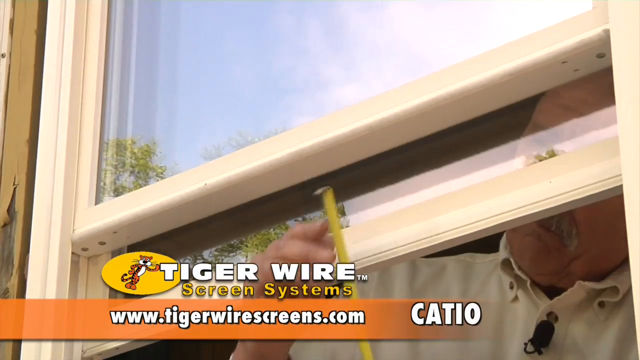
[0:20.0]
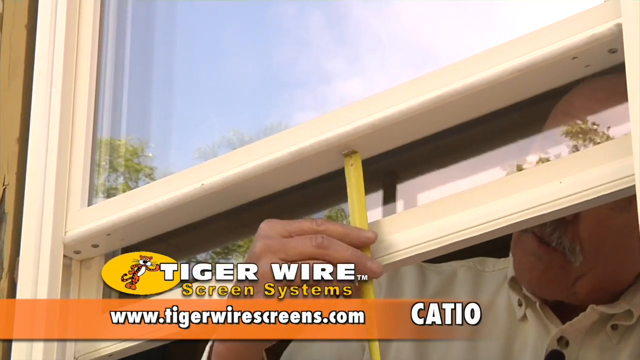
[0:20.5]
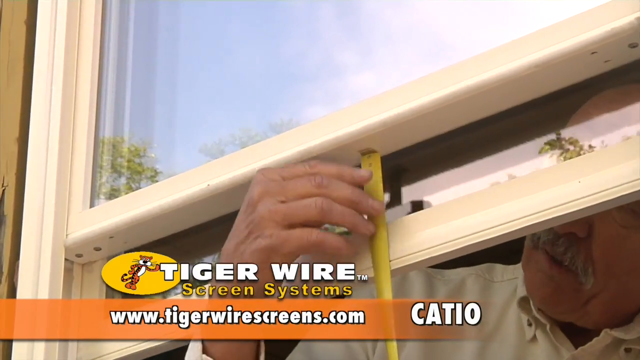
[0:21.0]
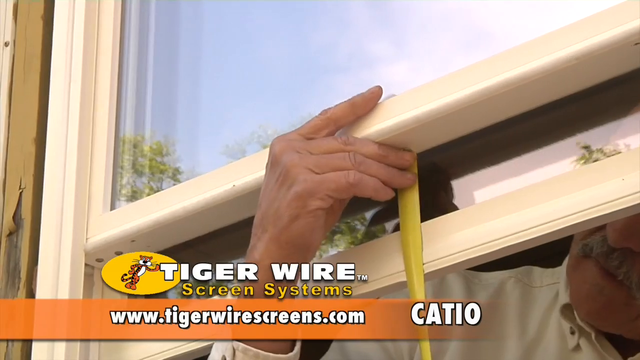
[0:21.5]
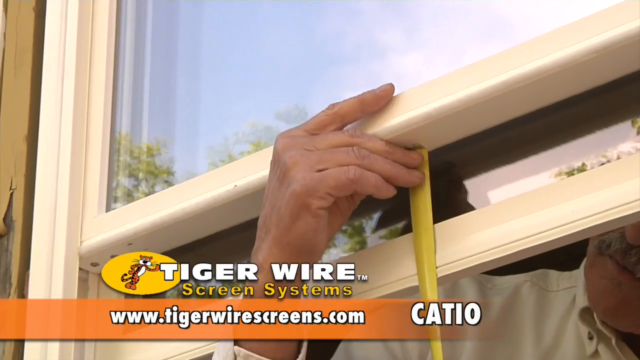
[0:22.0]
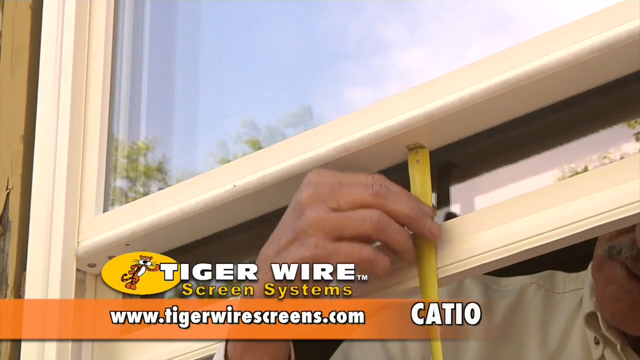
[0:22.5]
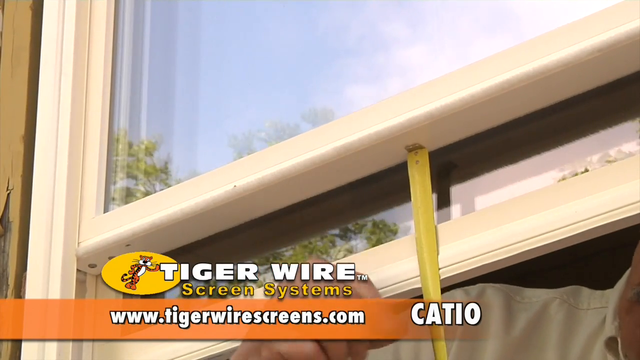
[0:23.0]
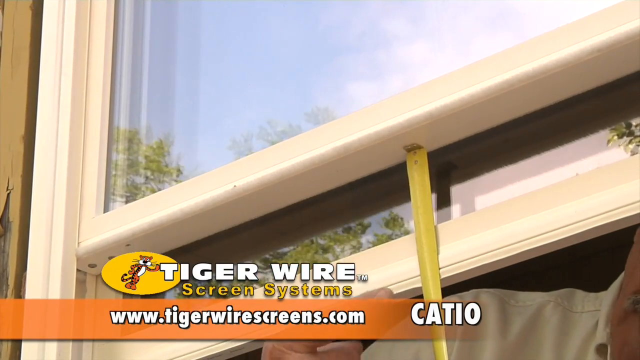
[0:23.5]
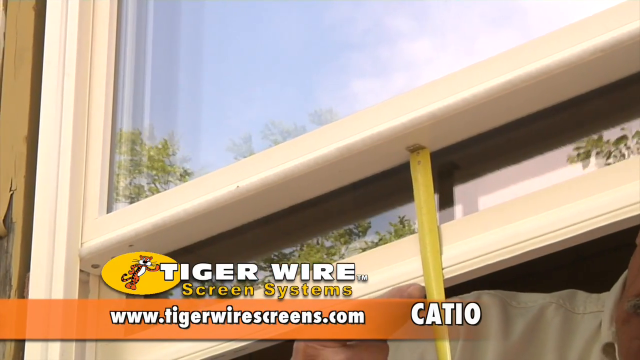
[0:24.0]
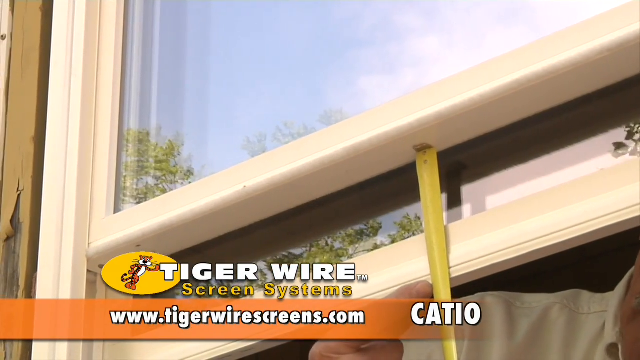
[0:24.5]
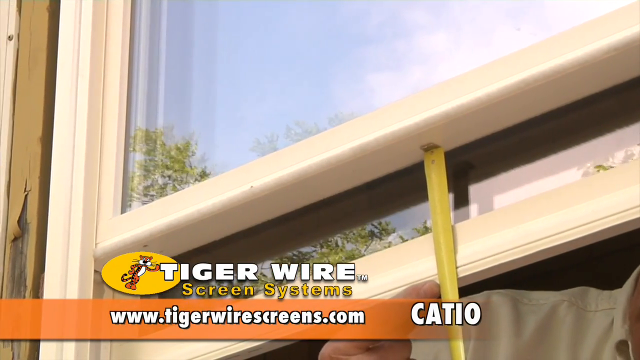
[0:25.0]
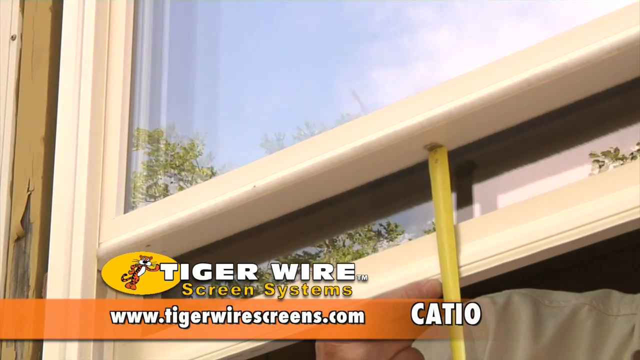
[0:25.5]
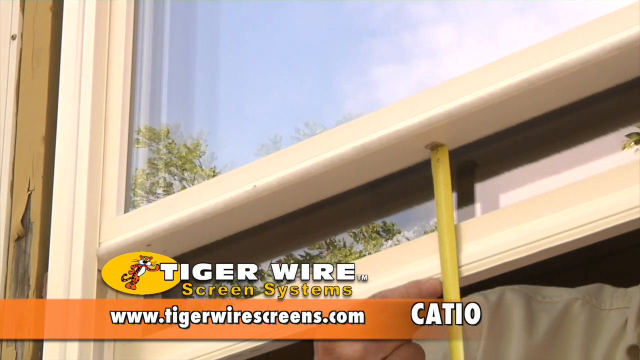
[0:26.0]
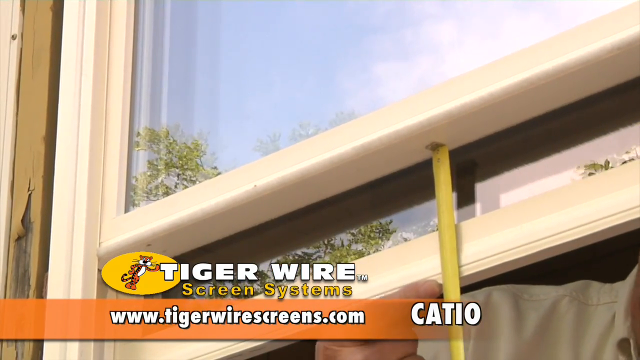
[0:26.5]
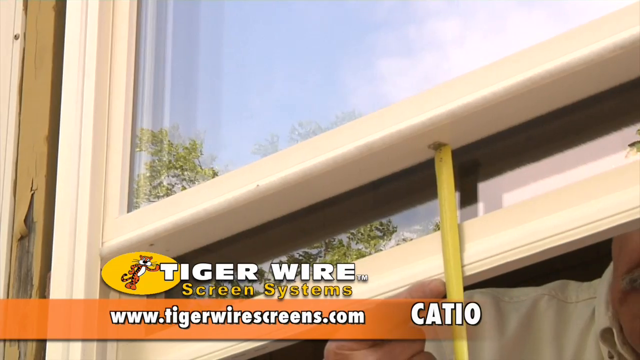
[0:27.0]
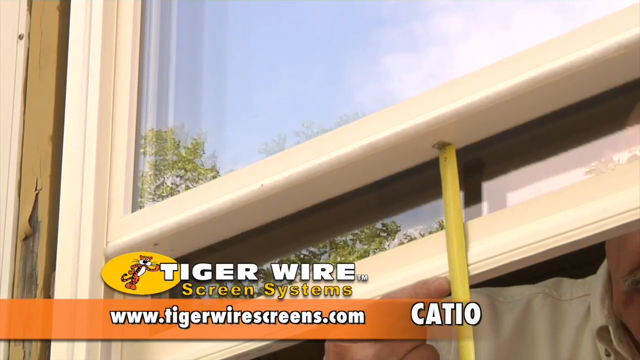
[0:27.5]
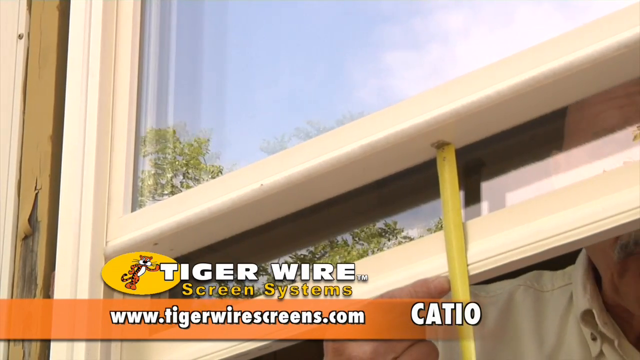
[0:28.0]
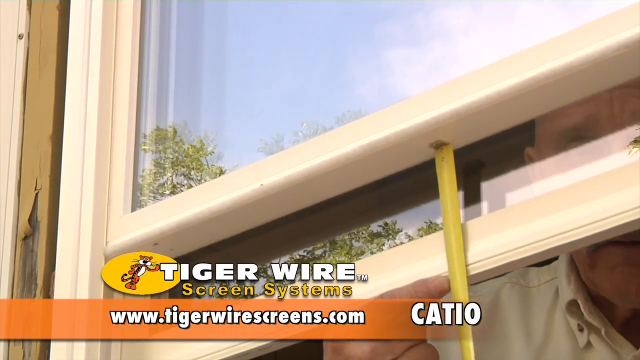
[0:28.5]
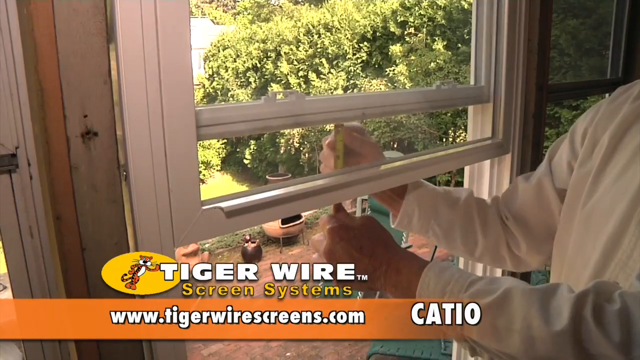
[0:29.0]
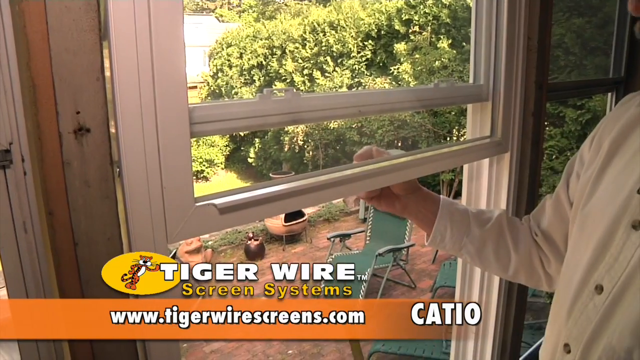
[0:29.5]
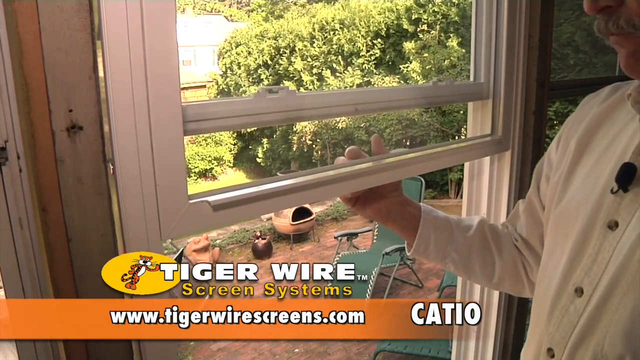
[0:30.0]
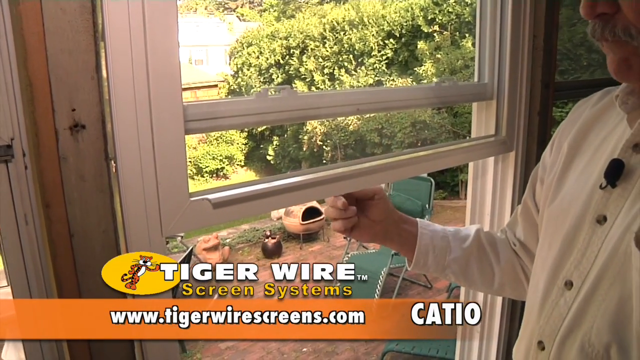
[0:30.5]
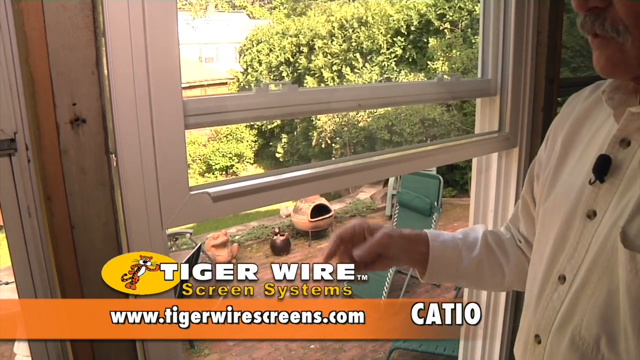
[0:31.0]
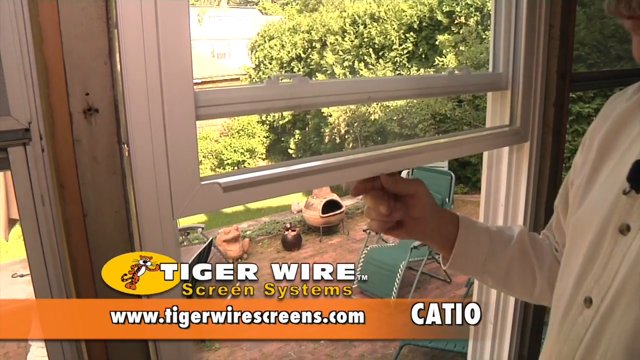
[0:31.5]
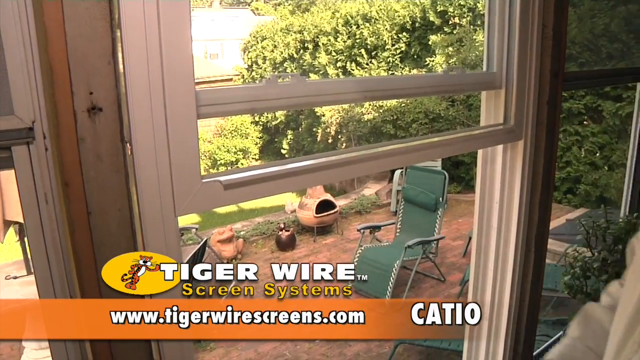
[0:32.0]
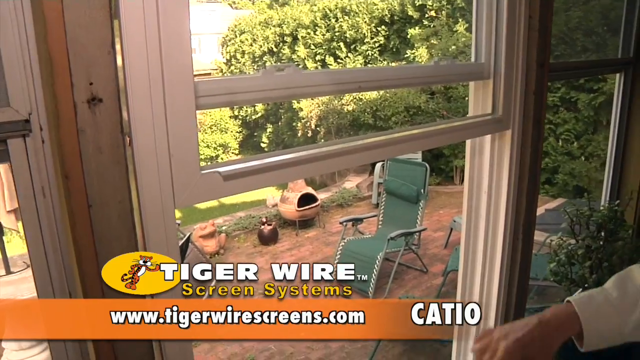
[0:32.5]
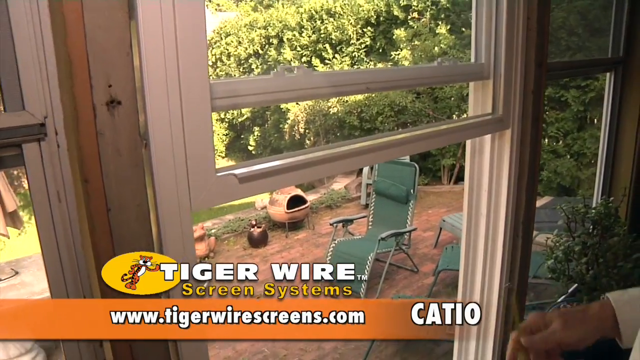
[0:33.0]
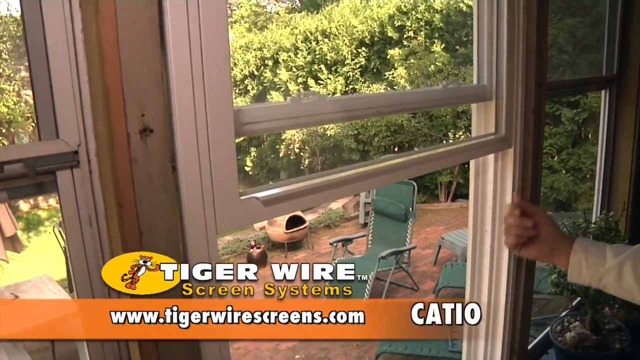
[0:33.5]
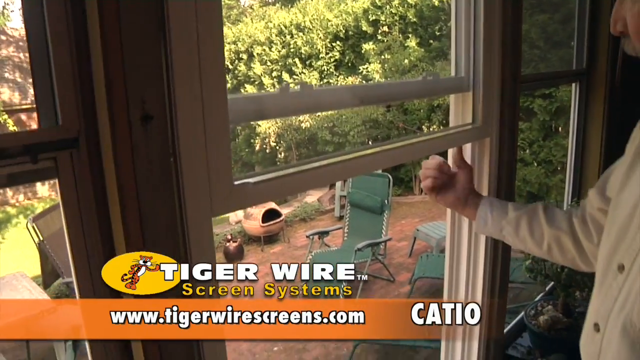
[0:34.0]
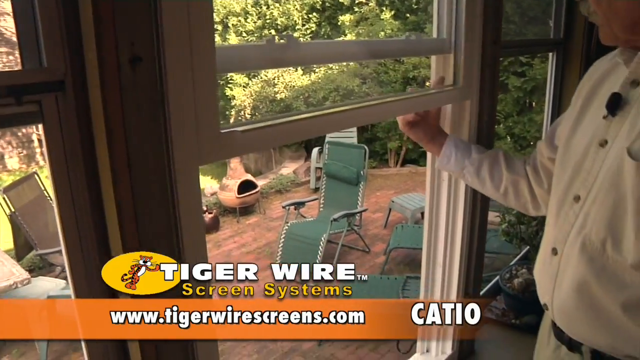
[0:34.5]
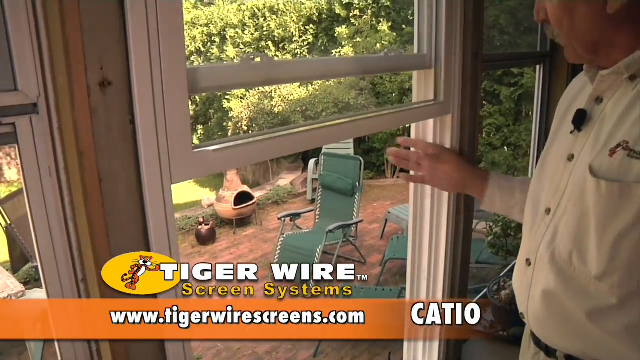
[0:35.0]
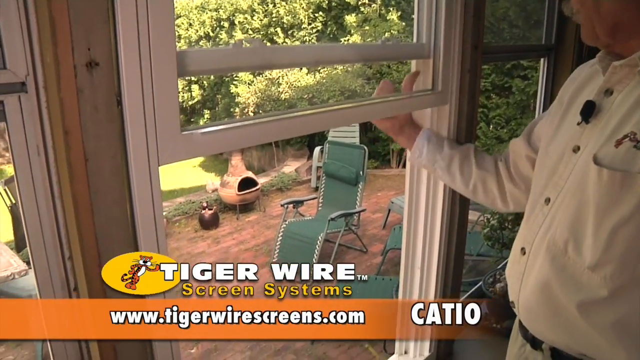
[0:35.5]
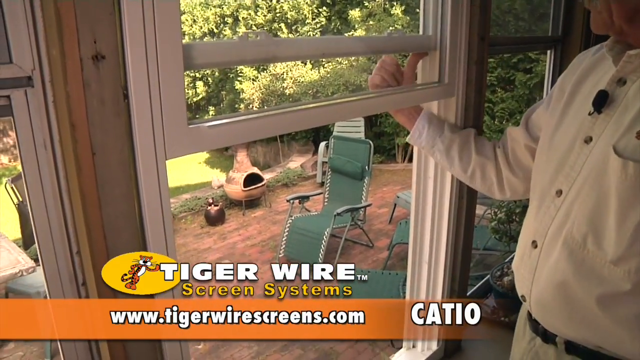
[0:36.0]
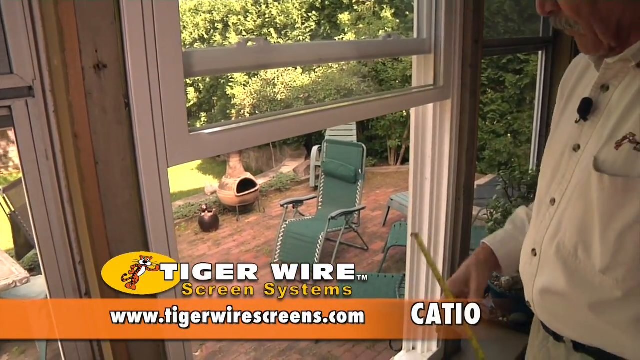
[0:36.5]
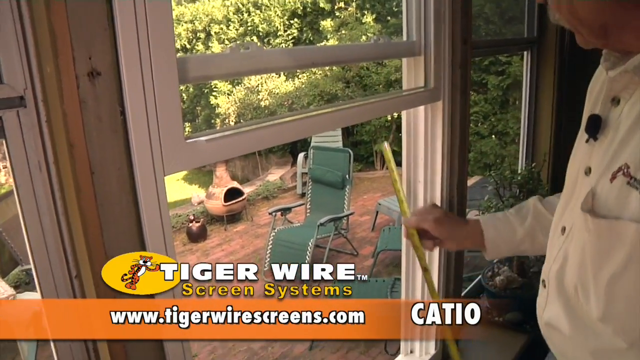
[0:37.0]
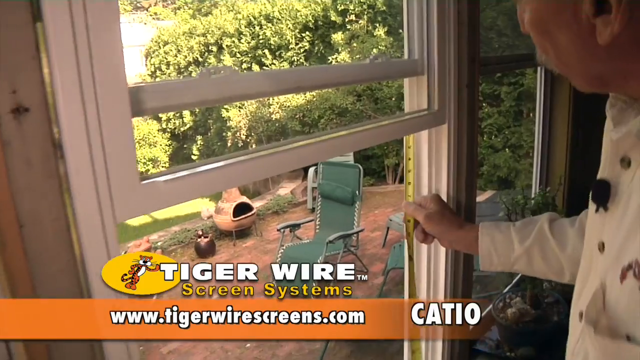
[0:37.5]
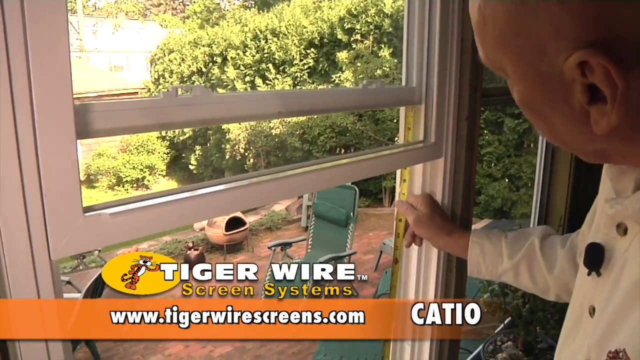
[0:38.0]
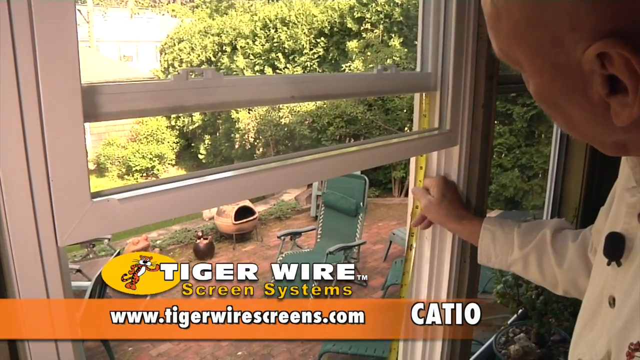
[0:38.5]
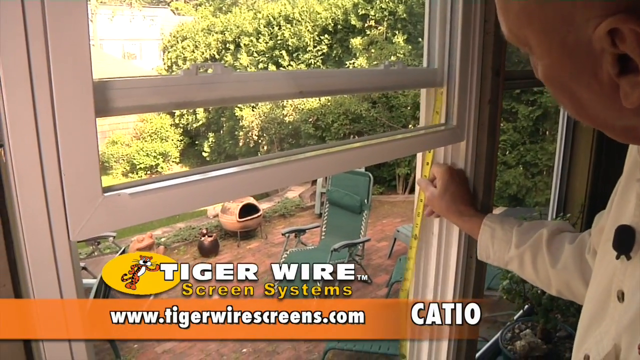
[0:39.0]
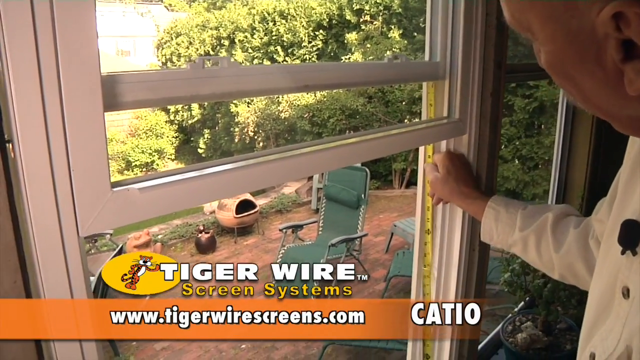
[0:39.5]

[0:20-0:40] The Tiger Wire logo appears along with the website, www.tigerwirescreens.com, for the catio being sold. A man uses a tape measure to measure a window to get the exact size for fitting the catio. The view then shifts to the inside, looking out the window, as the man uses his hand to demonstrate where he is measuring. He puts the tape measure on the outside of the window frame, apparently about to measure down to the bottom of the window frame.